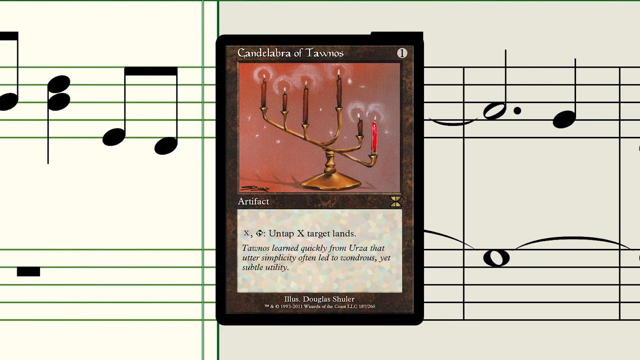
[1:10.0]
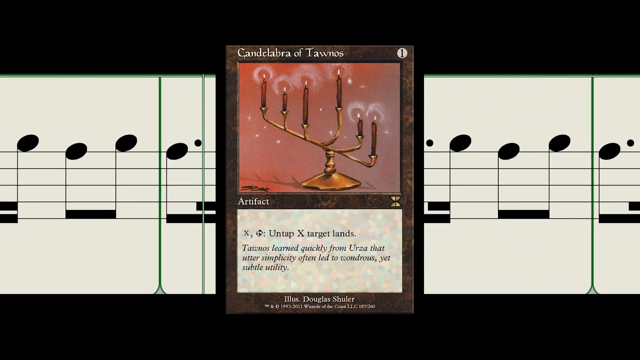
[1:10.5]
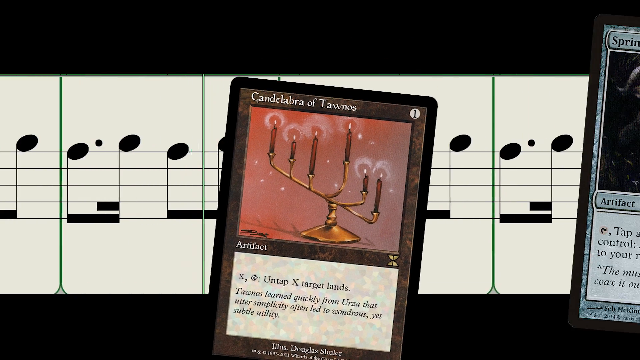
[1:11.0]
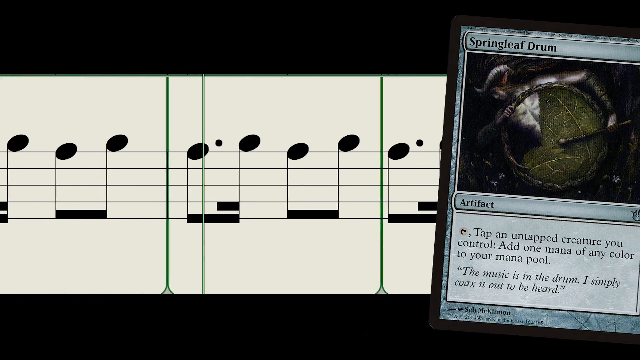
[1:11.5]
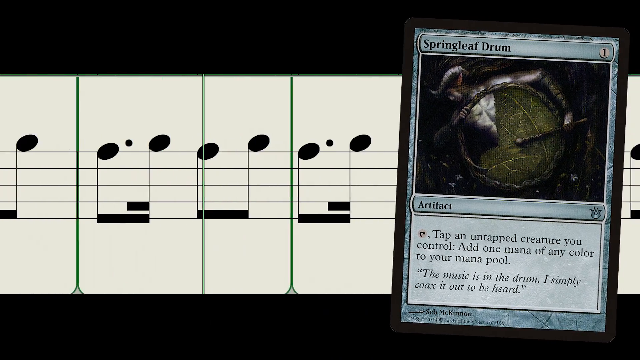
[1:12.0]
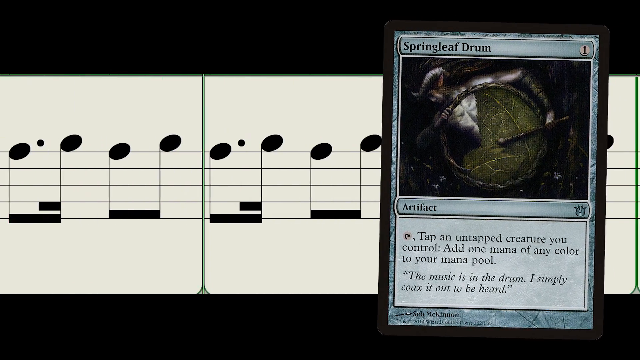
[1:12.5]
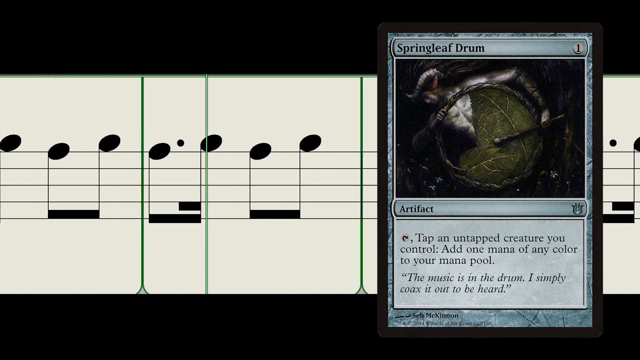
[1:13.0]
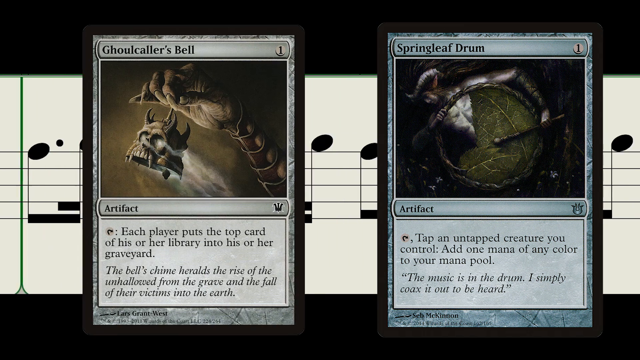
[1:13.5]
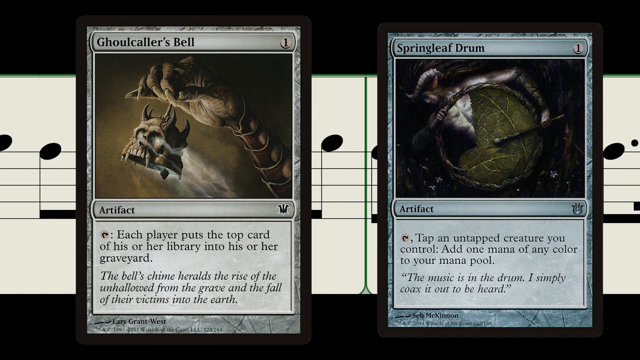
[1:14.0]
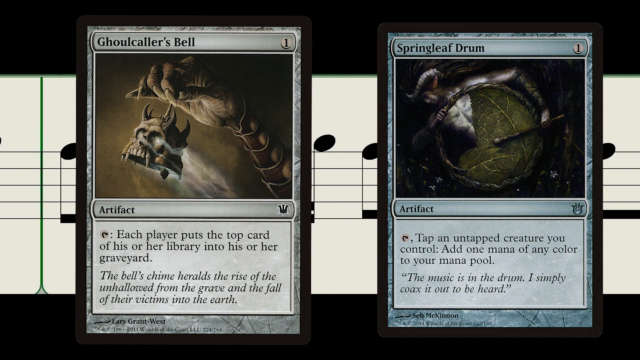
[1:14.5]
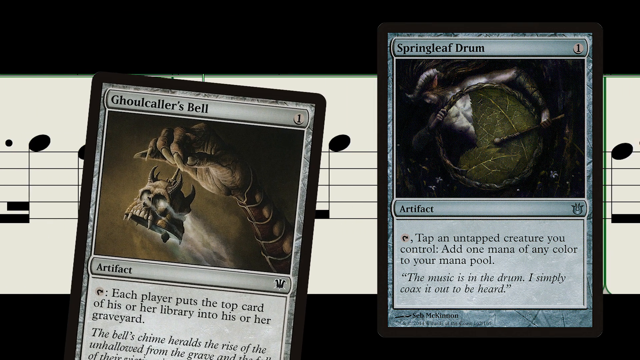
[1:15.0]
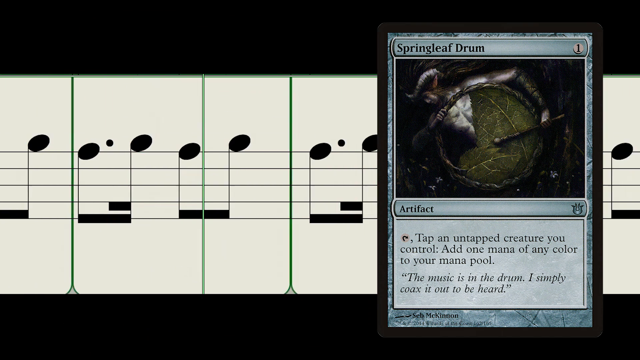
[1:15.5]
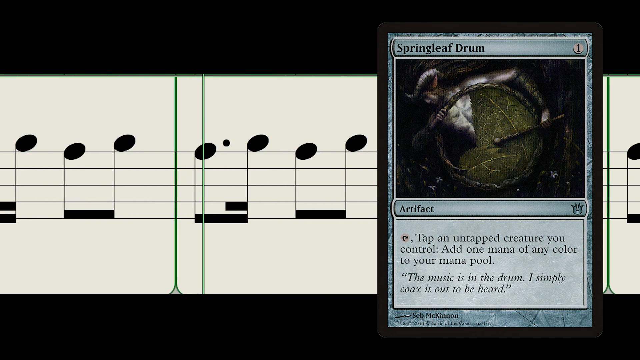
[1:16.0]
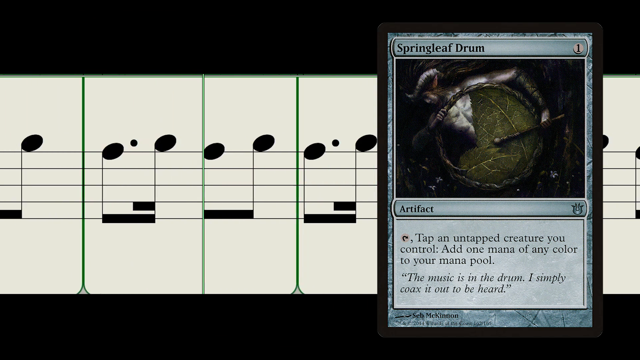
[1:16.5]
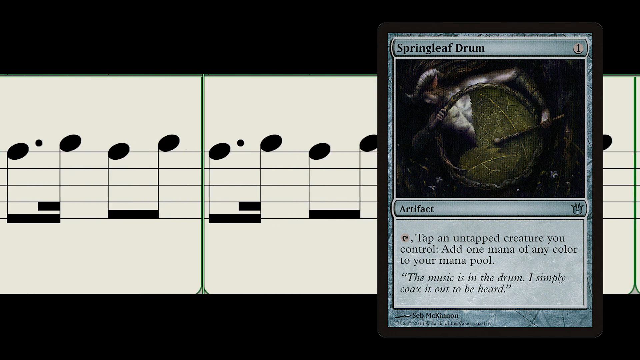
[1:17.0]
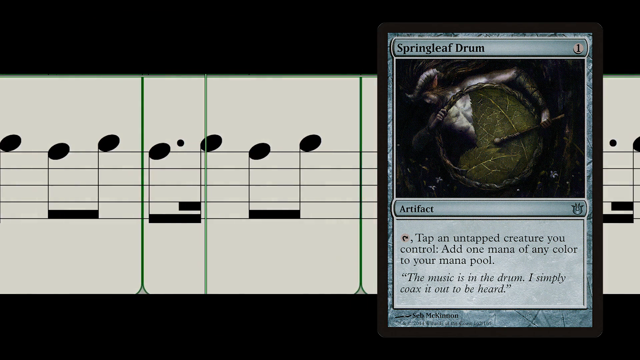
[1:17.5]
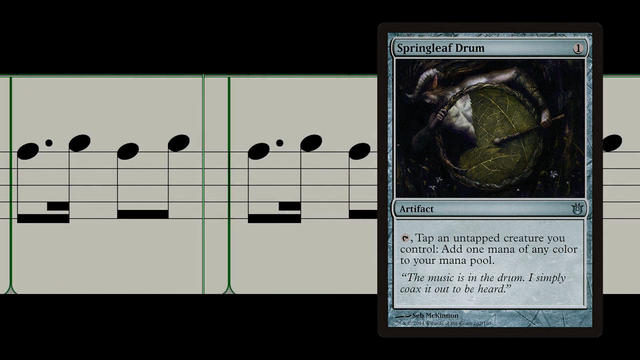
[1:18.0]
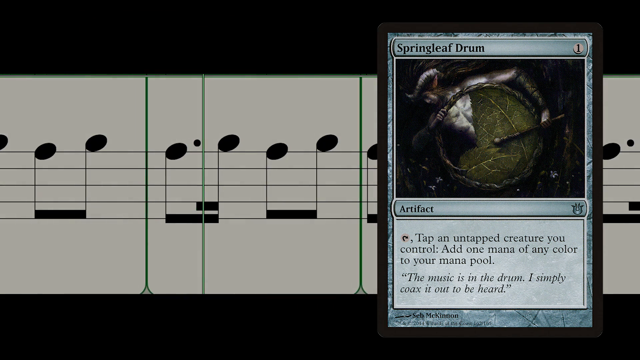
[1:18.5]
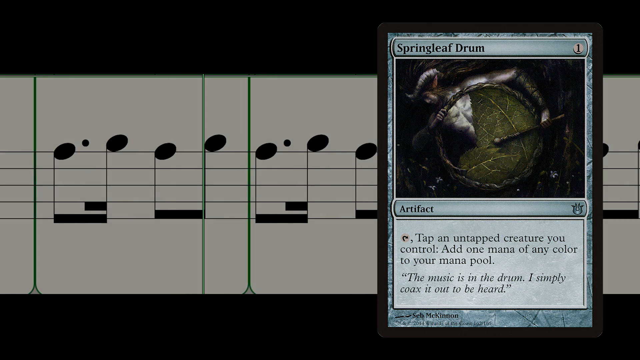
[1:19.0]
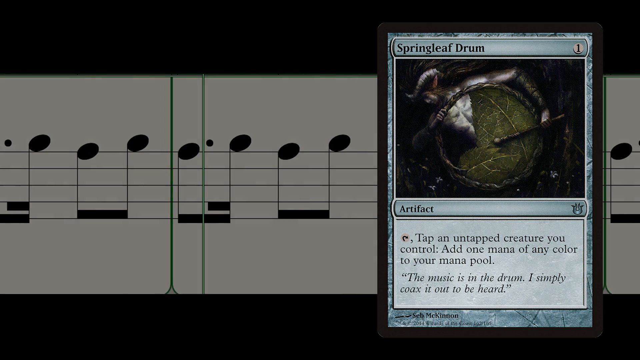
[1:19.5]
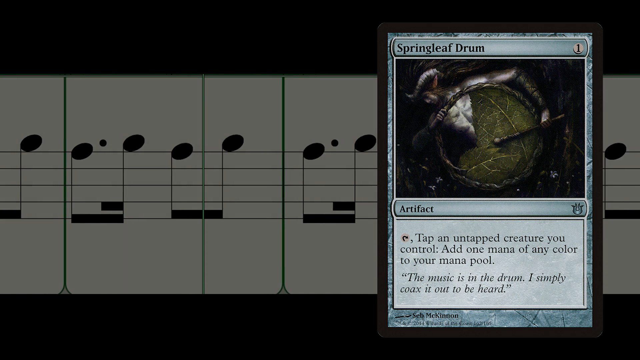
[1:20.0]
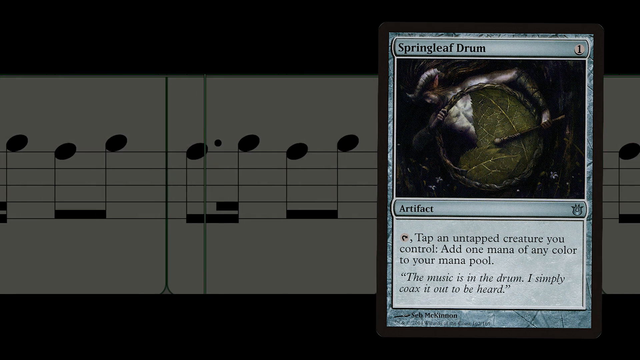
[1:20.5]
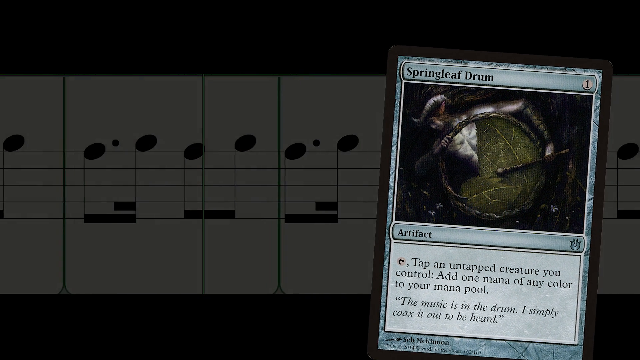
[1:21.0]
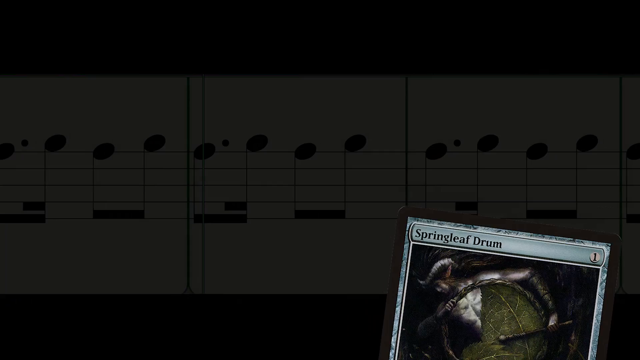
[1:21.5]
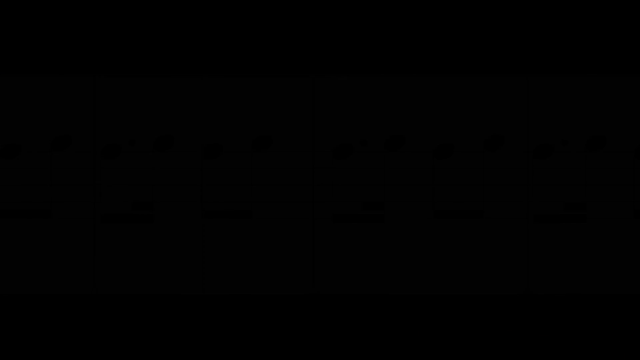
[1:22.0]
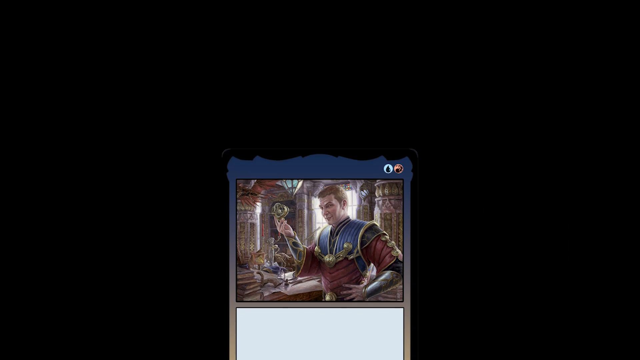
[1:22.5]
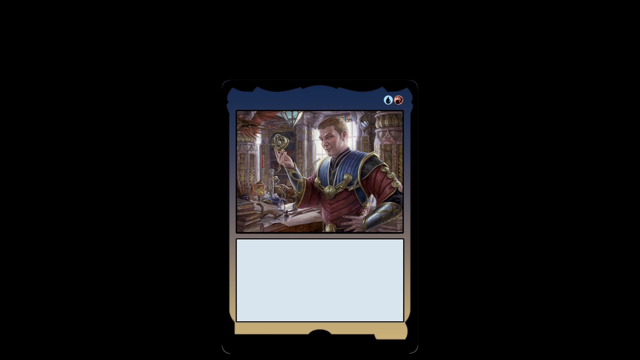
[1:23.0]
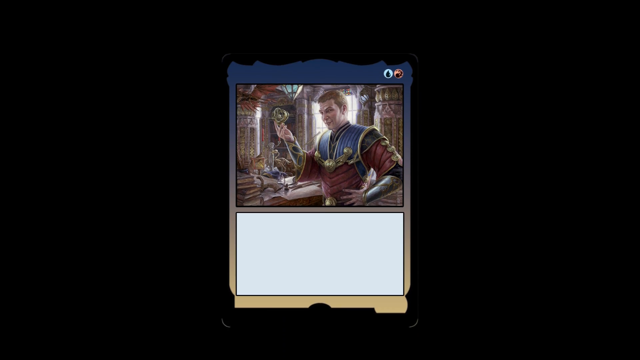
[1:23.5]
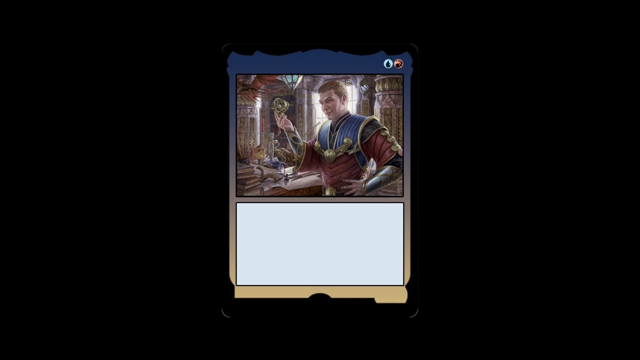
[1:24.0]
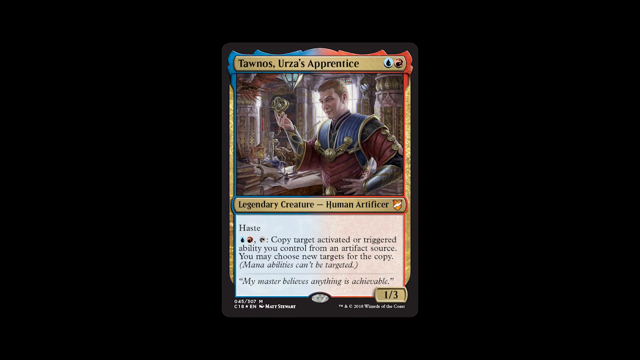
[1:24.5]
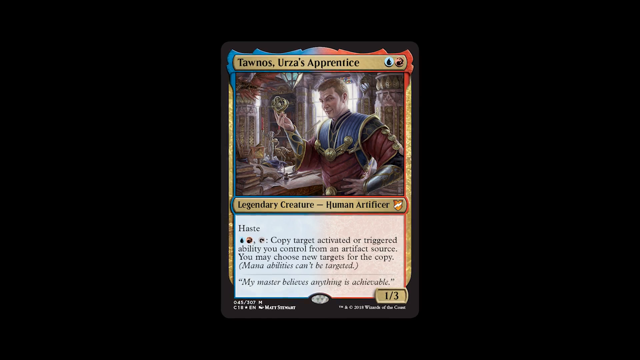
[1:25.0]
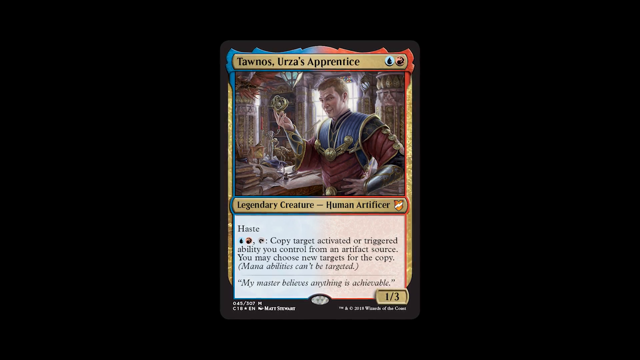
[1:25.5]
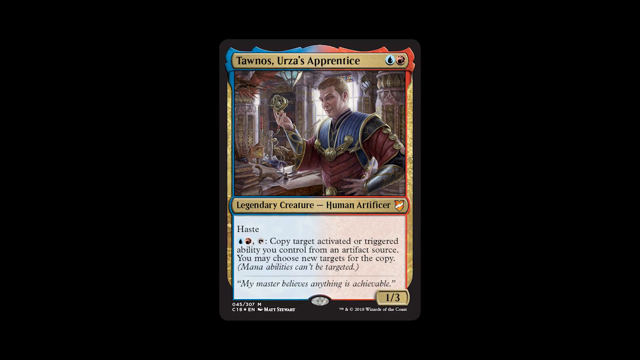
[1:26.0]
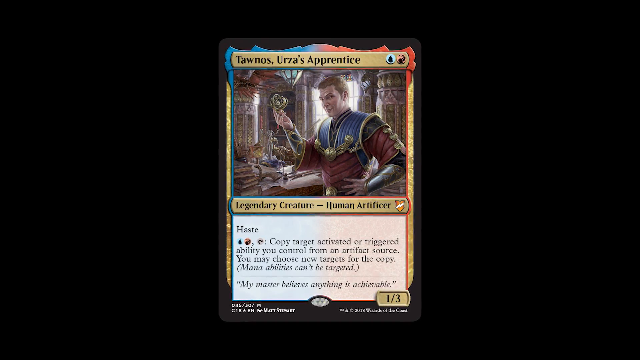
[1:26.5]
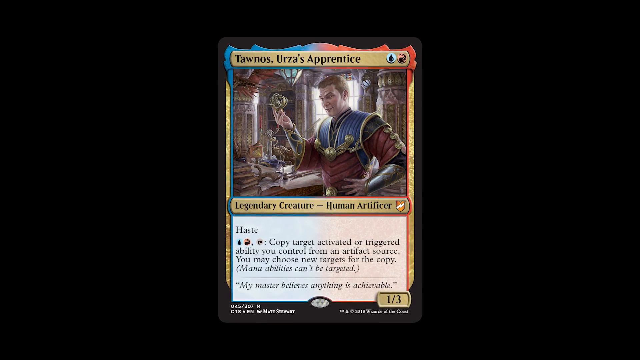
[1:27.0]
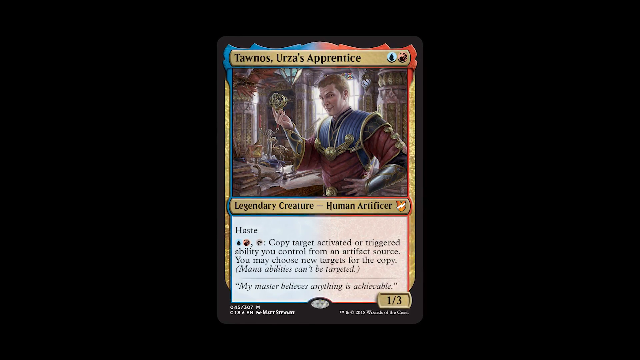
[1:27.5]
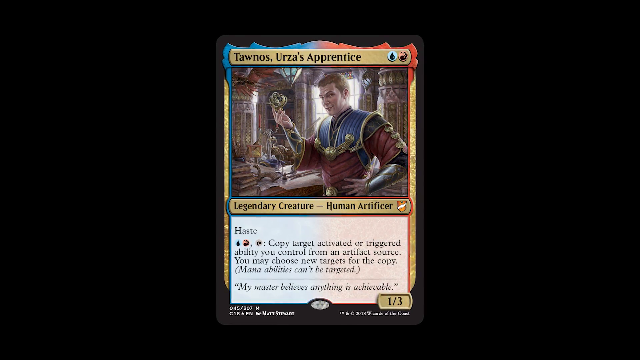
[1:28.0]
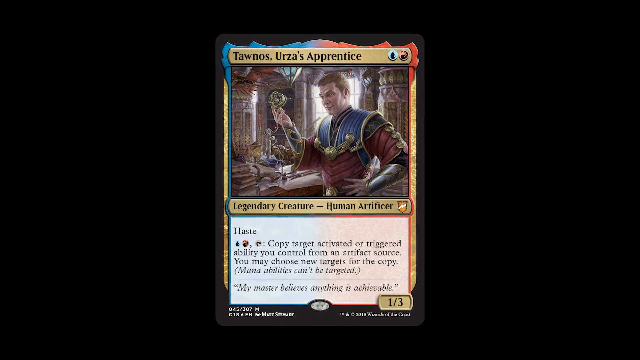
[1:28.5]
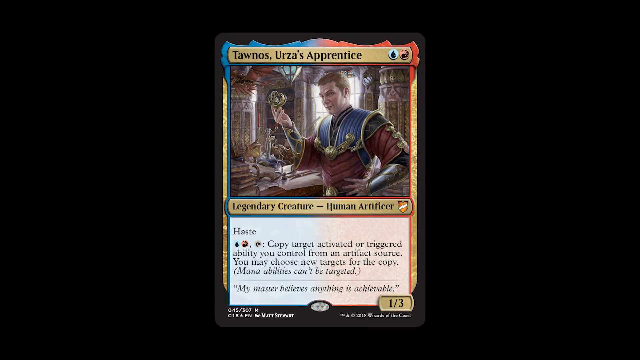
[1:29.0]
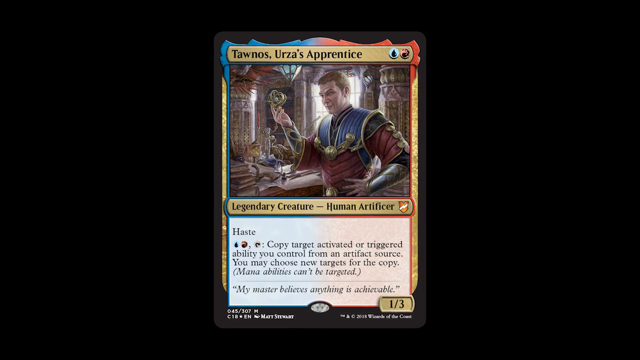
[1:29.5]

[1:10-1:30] The menorah card drops down and disappears, and a new card, more bluish at the top, appears from the right side of the screen. At the top it reads "spring leaf drum," and below is what looks to be a leaf in a circular pattern with a drumstick on top of it. A whitish-gray card then appears on the left side, reading "Ghoulcaller's Bell" at the top; a skeletal hand comes up from the bottom right of the card holding what looks to be the top half of a skull with something like four horns coming out of each side, and smoke coming out of its eyes. That card drops off the screen, while the music notes keep scrolling from right to left the whole time. The Springleaf Drum card then drops down too, and the screen fades to black. The earlier card with the man in blue and red armor comes back up from the bottom center of the screen. It glows for a moment and a pattern appears around it: previously mostly empty with no text, the card turns mostly gold, with a bluish fire pattern in the top left, a reddish fire pattern in the top right, and a gold horizontal bar in the middle with black text reading "Thanos Urza's Apprentice."